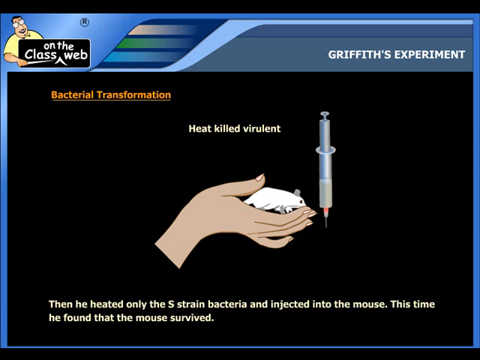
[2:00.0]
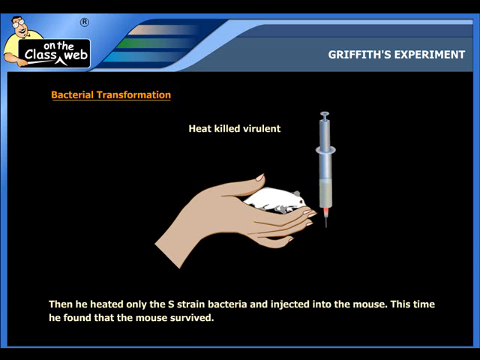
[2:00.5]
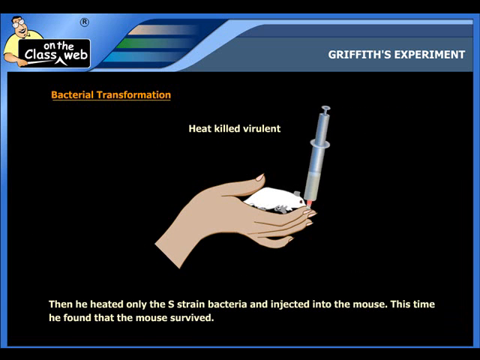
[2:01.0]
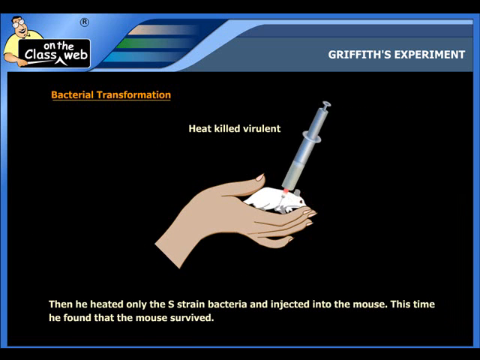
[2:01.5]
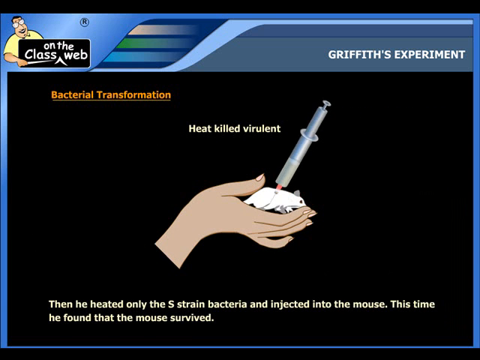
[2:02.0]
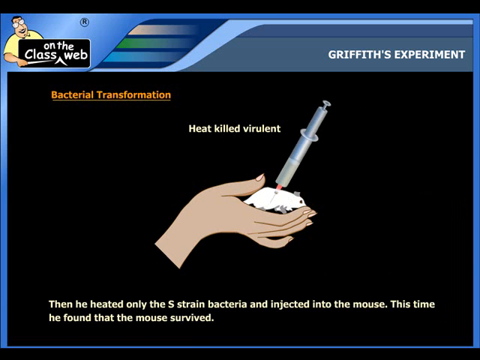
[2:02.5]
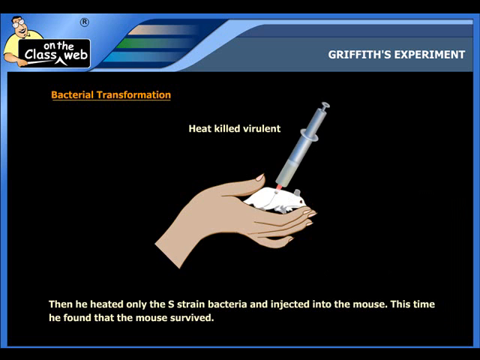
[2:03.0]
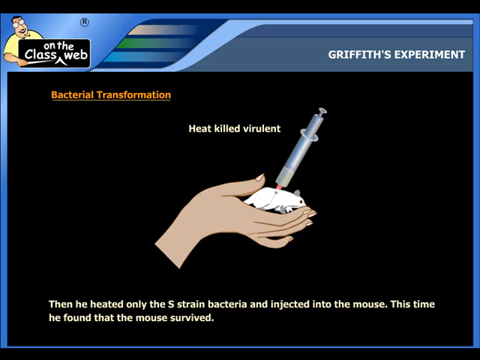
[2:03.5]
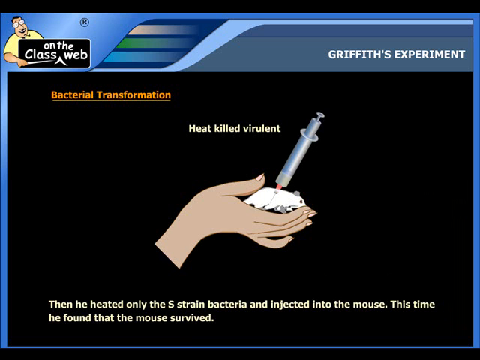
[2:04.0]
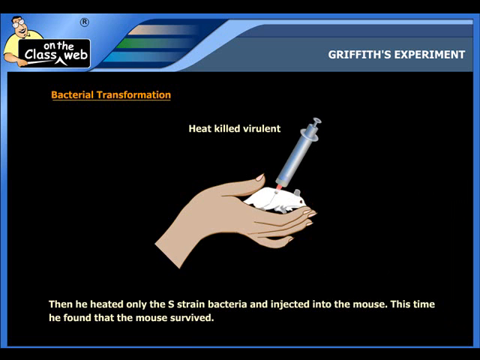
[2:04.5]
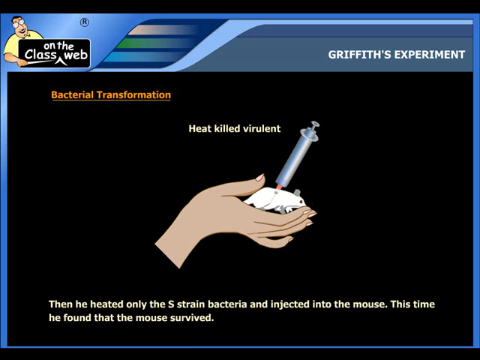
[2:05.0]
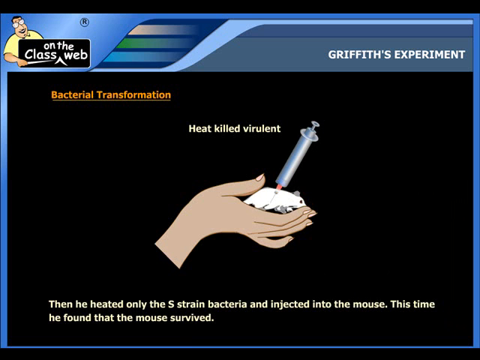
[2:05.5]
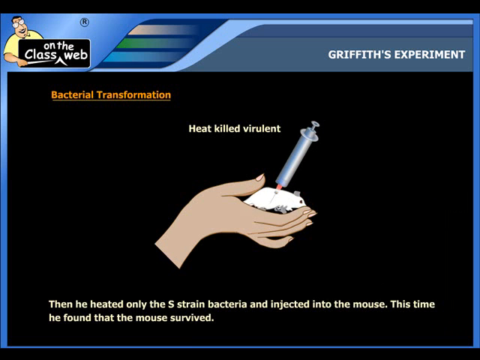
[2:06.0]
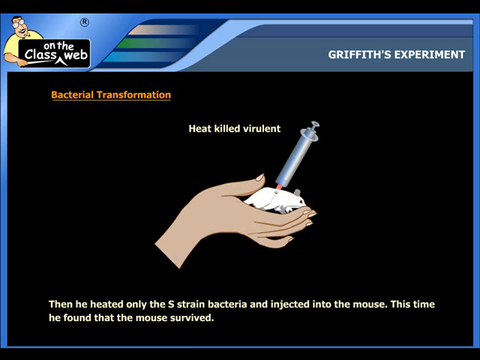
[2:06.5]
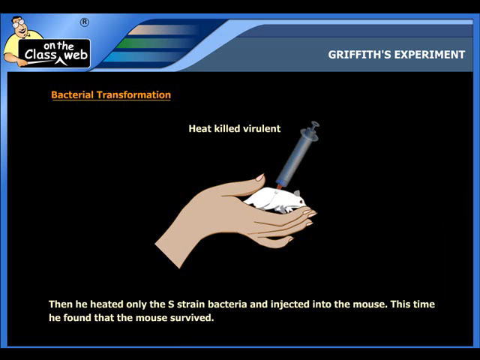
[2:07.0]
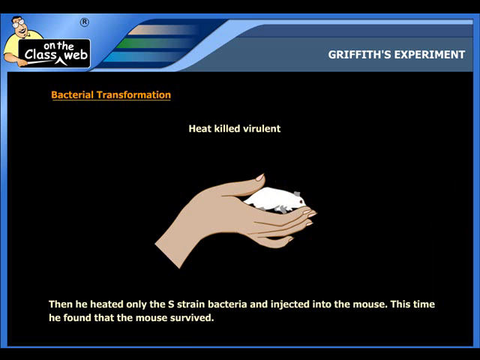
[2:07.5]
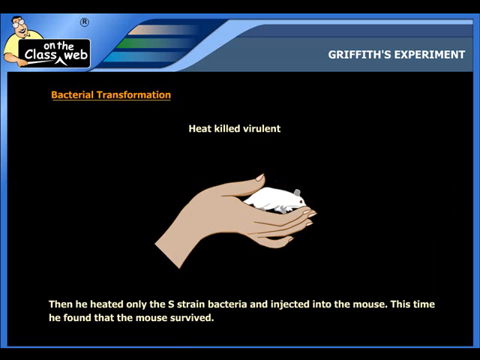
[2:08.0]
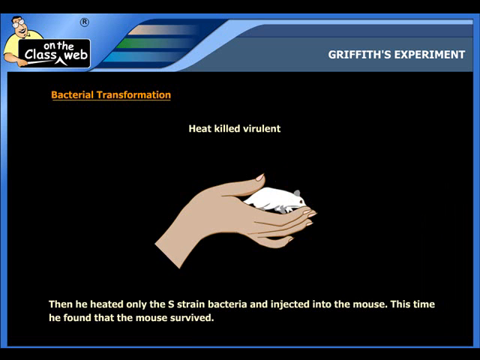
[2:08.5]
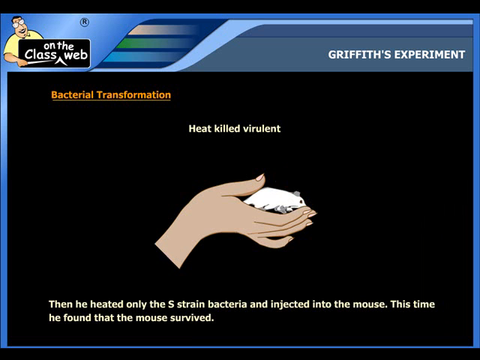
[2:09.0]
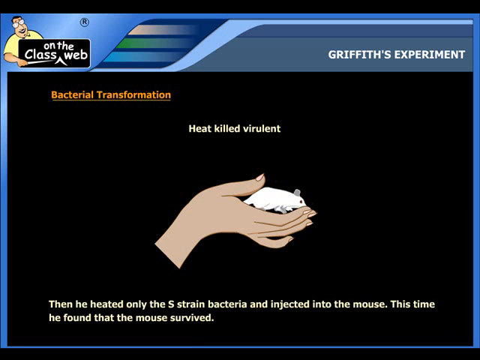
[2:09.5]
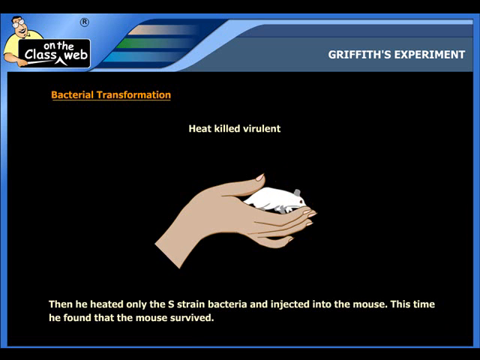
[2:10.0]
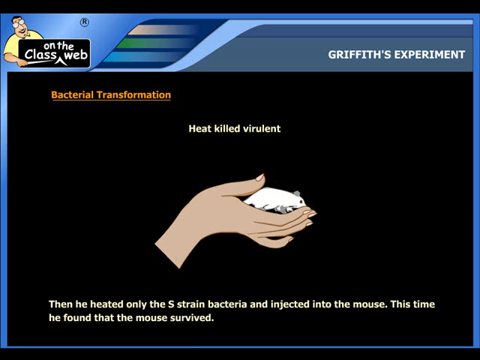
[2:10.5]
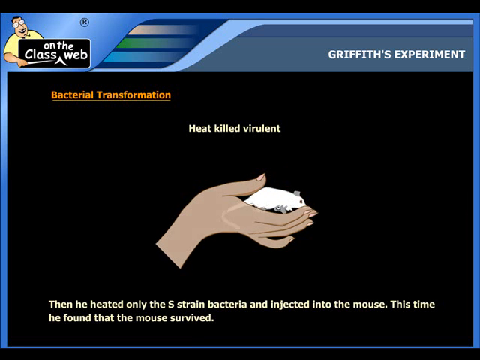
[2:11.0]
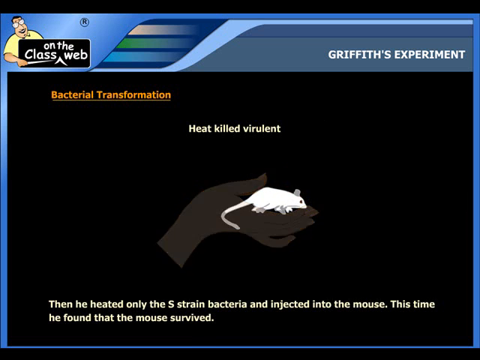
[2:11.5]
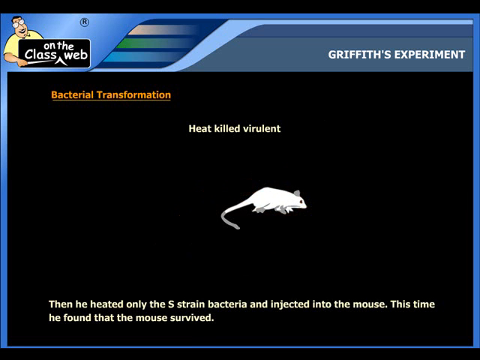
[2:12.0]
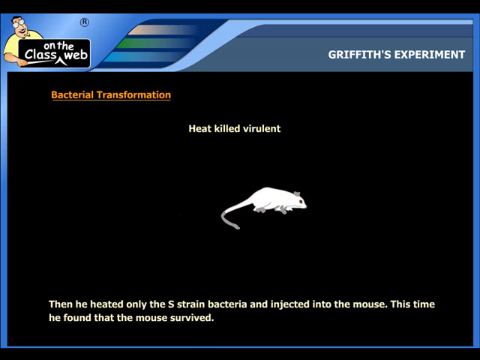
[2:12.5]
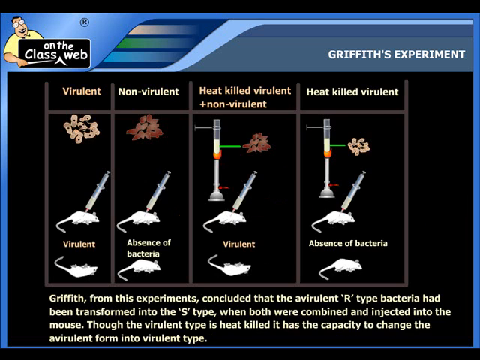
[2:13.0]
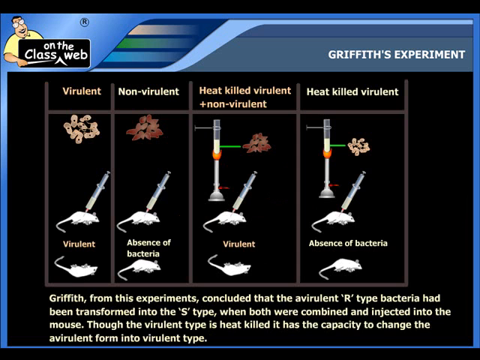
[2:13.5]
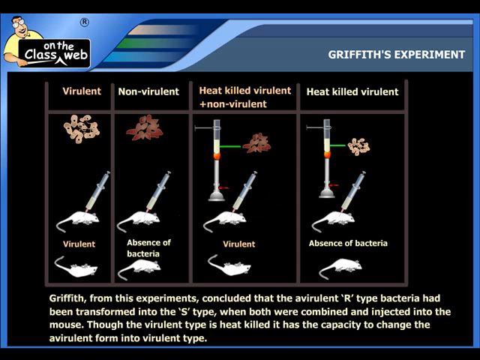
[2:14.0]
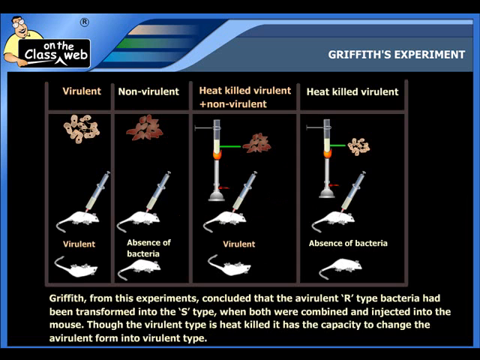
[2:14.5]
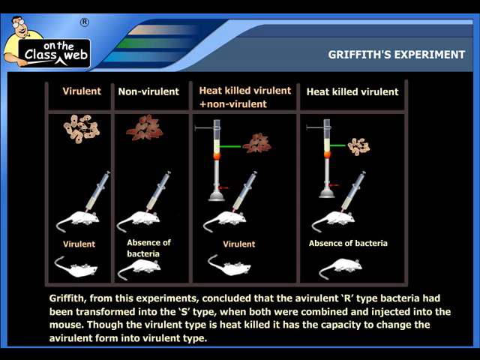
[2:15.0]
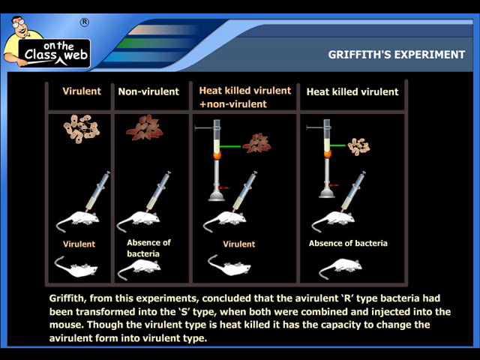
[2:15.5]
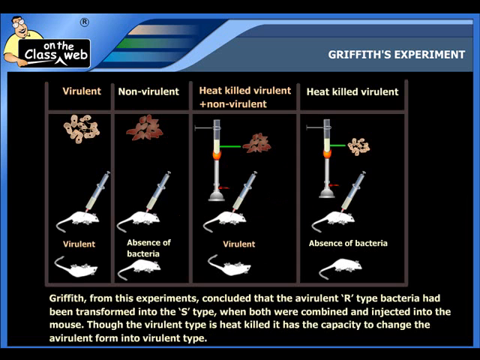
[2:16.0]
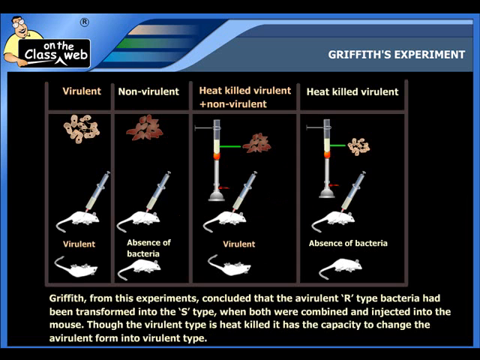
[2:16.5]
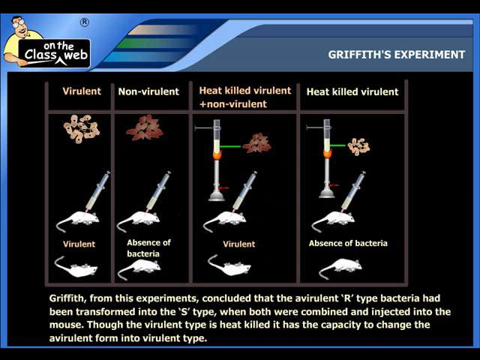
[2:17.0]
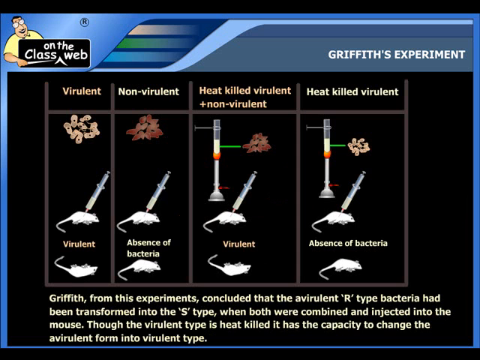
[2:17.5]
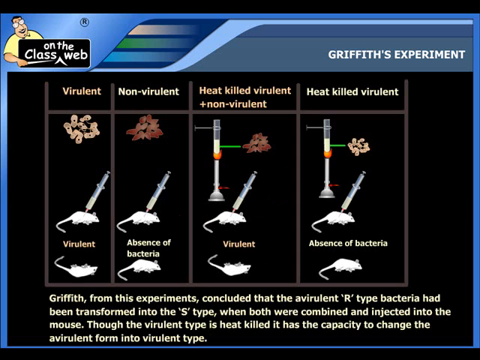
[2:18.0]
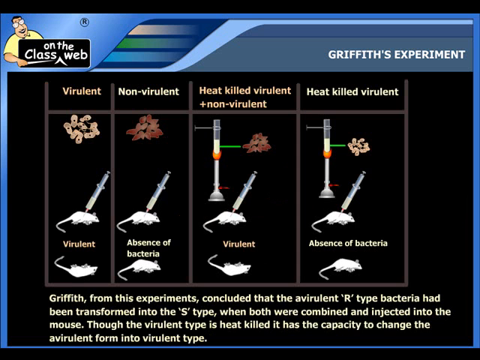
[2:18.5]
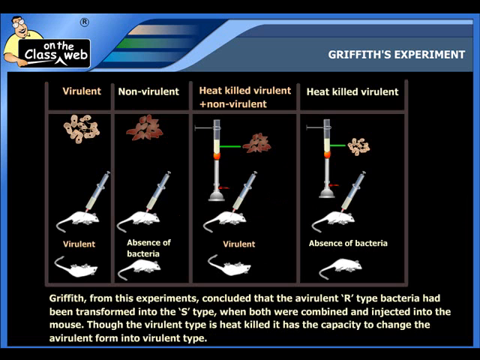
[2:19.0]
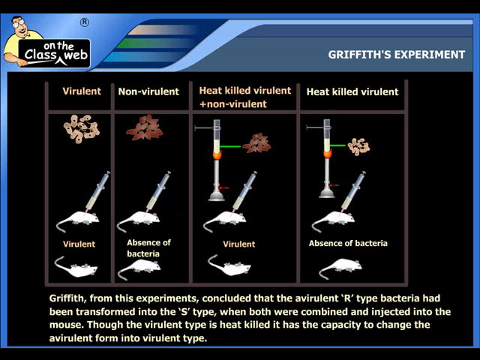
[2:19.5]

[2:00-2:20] In the top left corner, a little cartoon man who is a teacher has black hair, glasses and a yellow shirt. With his right hand in front, he holds a pointer pointing to a sign facing the viewer, with a black background and white letters that says "on the class web." To the right, white letters read "Griffith's Experiment." On the main page, orange letters on a black background say "Bacterial transformation," and underneath, in the middle, it says "heat-killed virulent." A cartoon hand holds a white lab mouse, and to the right of and above the hand is a syringe needle pointing down. Text at the bottom reads: "Then he heated the only S-strain bacteria and injected it into the mouse. This time, he found that the mouse survived."